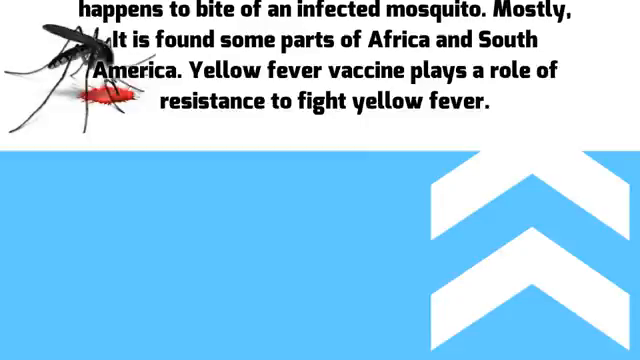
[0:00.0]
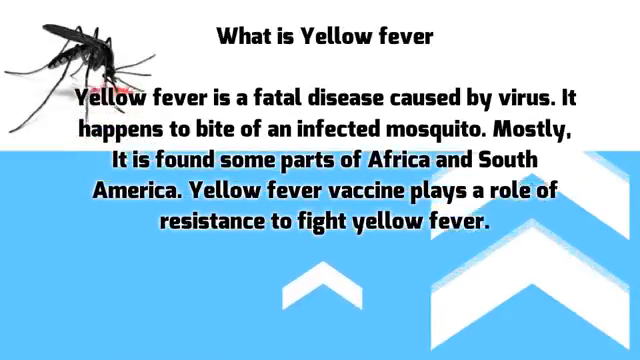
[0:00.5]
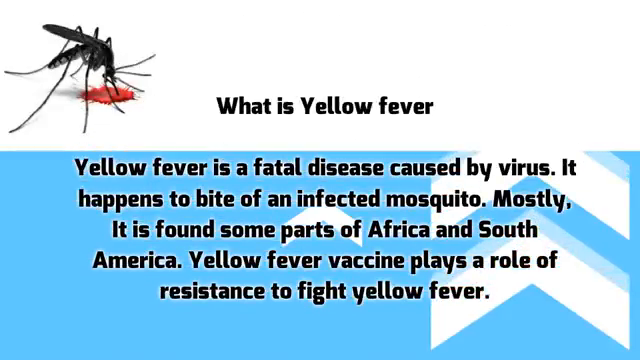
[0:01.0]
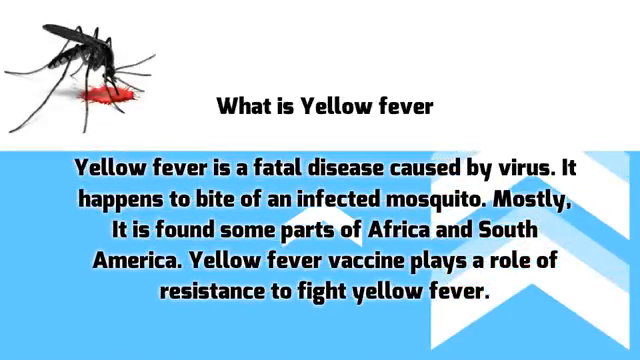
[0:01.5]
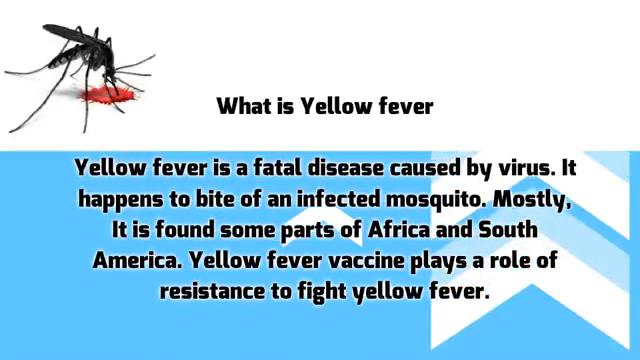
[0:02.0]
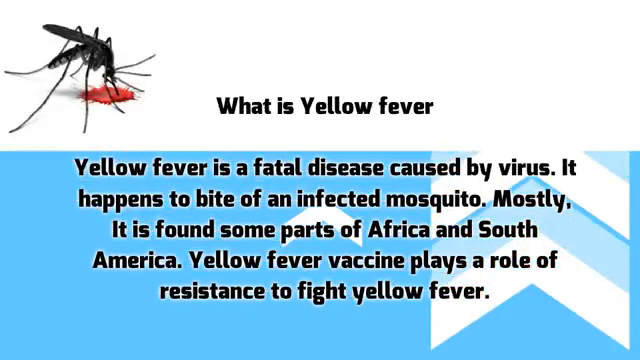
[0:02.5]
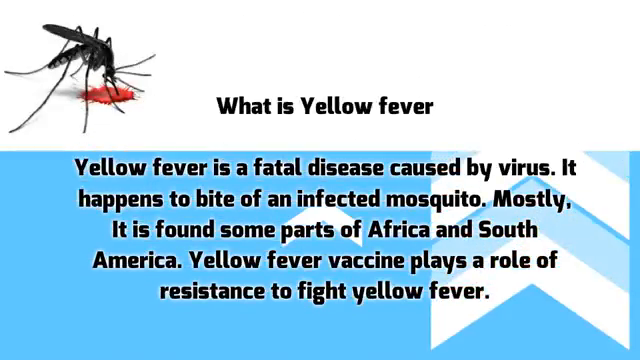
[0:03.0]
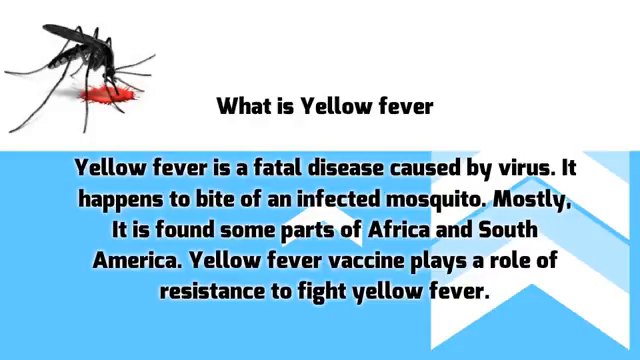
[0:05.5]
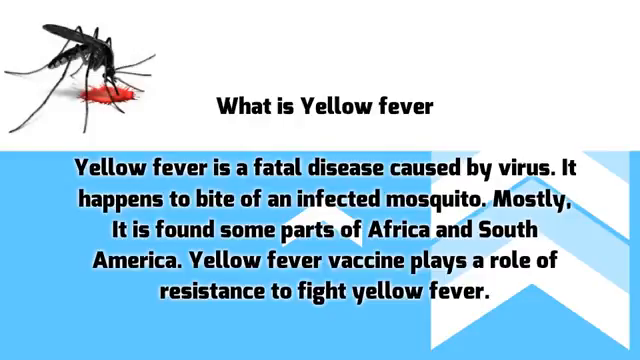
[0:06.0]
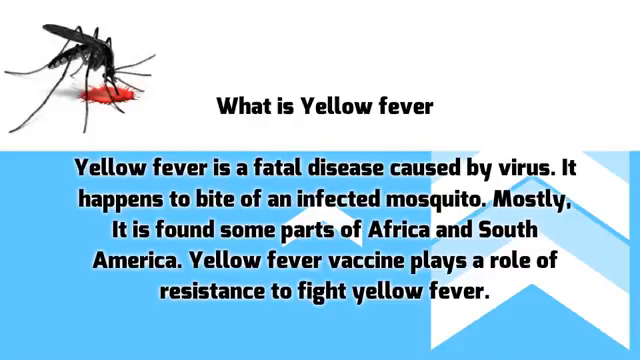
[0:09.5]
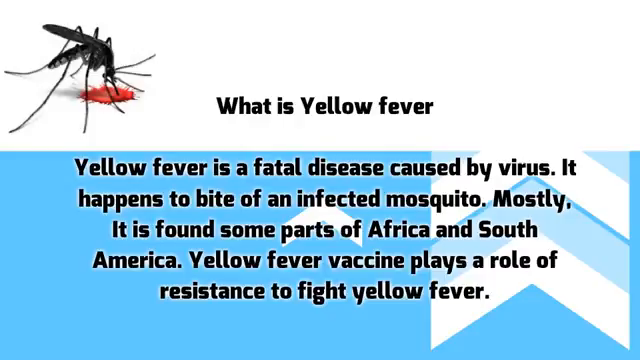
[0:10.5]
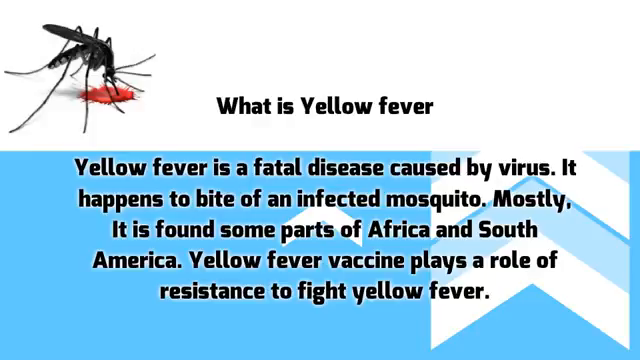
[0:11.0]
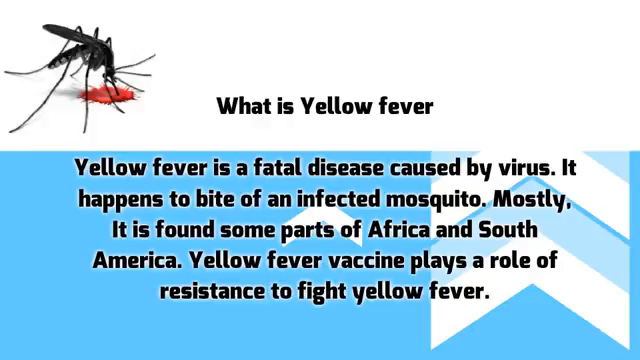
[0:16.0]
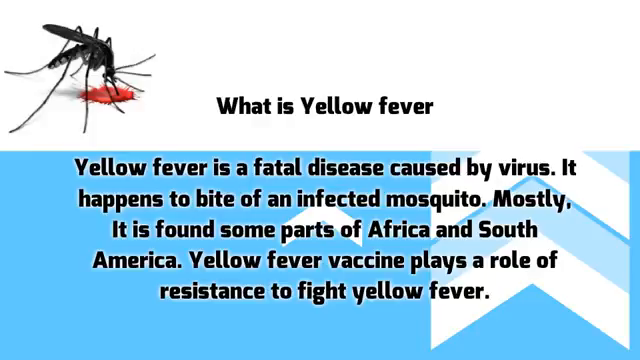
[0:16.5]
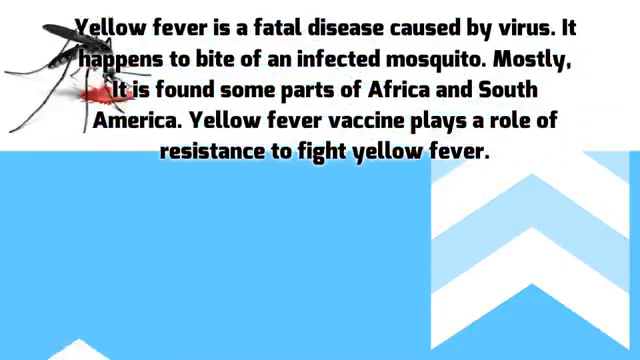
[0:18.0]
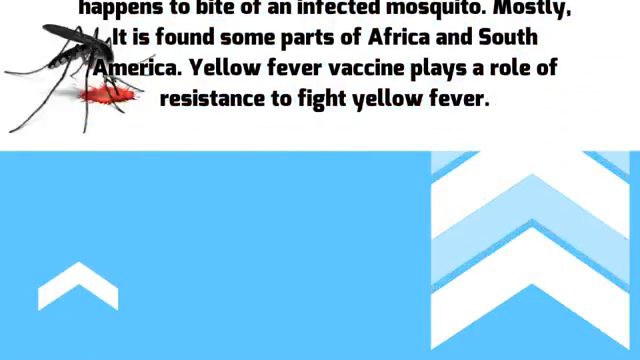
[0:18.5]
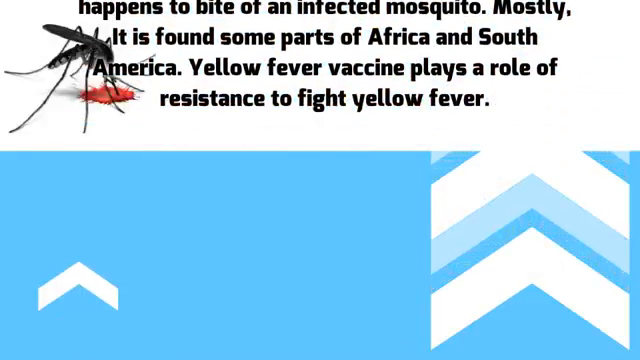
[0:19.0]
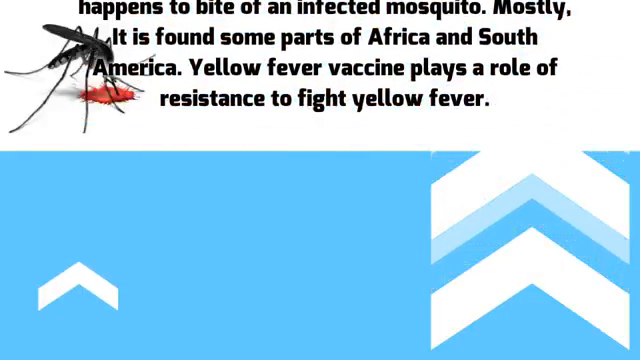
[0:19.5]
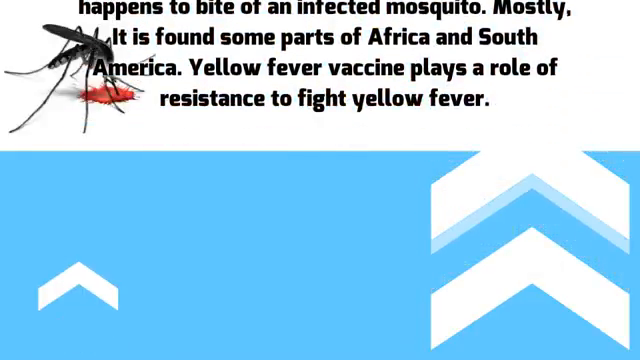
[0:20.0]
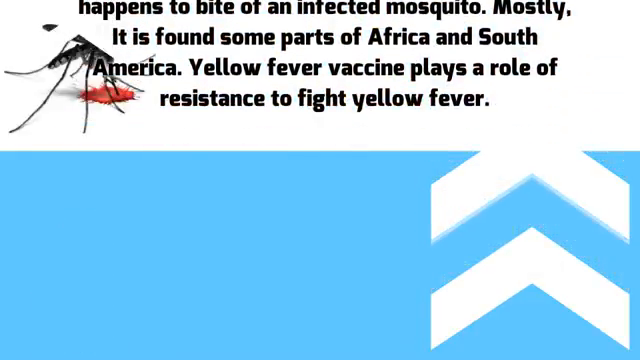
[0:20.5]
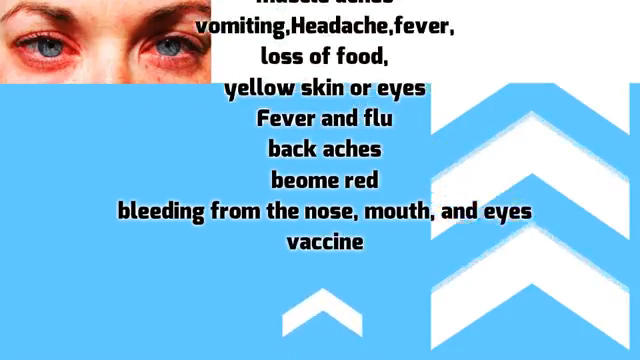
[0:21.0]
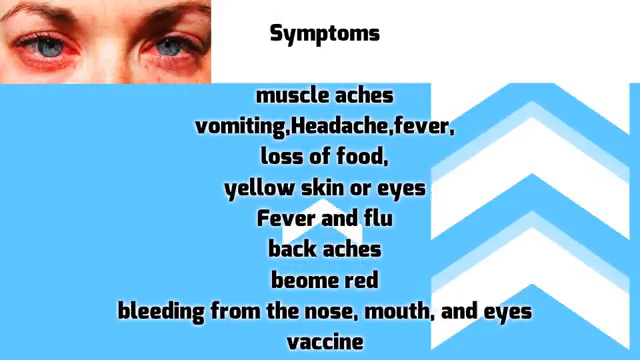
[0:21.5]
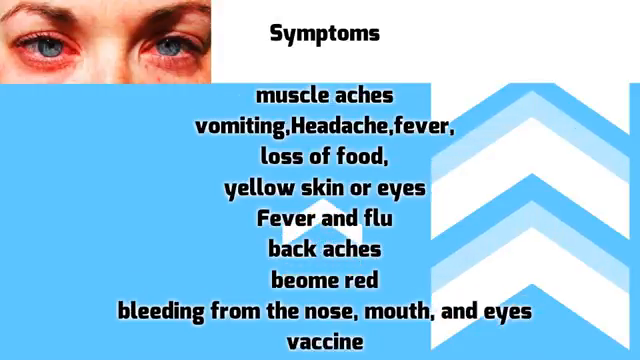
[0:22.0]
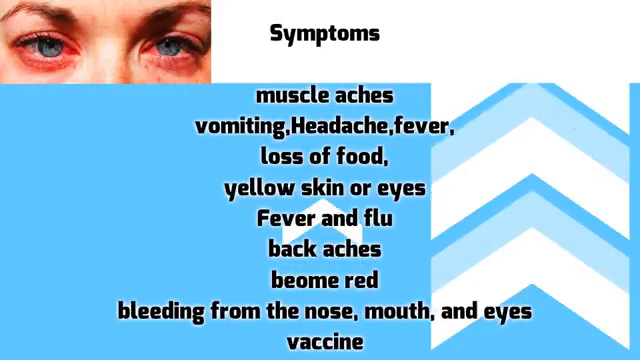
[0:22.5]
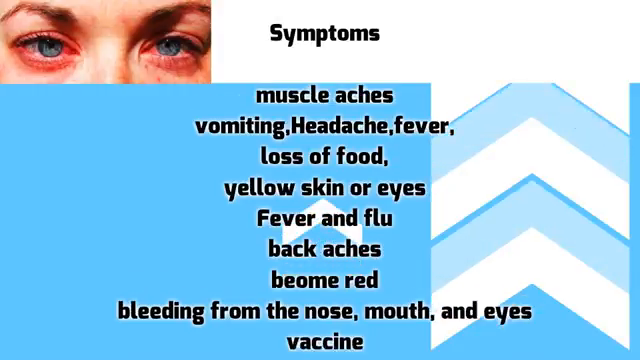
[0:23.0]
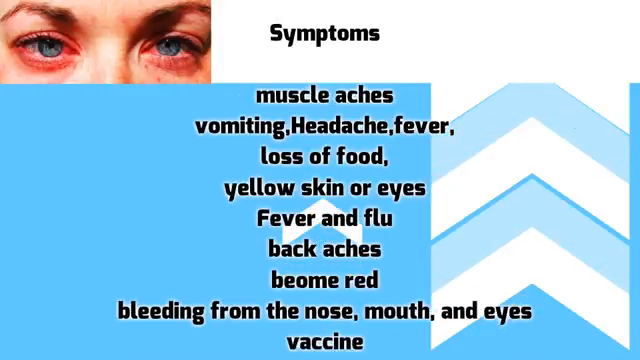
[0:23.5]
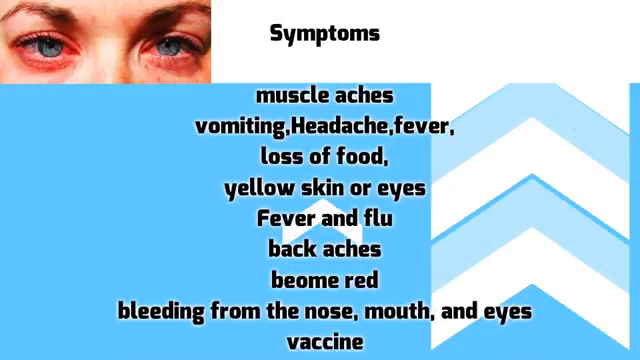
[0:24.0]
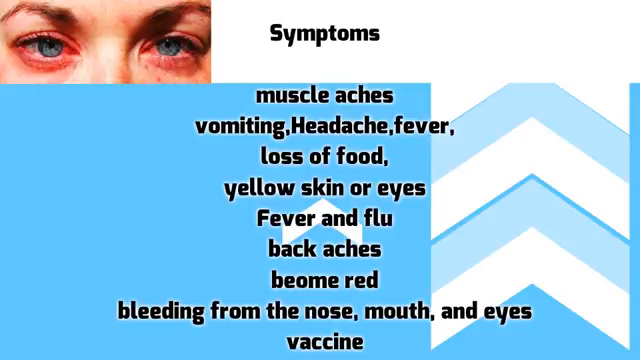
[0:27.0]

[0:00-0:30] The video opens on a blue and white background with text on the upper part of the screen reading "what is yellow fever?" To the left of the text is a large illustrated drawing of a mosquito drawing blood out of a white background. The explanatory text states that yellow fever is caused by a virus and that it is a fatal disease, and includes the lines "happens to bite of an infected mosquito. Mostly it is found in some parts of Africa and South America. The yellow fever vaccine plays a role of resistance to fight yellow fever." The text stays on the bottom blue and white part of the screen and is outlined in black against the blue and white background. The same text remains on screen until, near the end of the shot, it swipes upward and a list of yellow fever symptoms appears. An image of bloodshot eyes appears in a rectangle in the upper left of the screen. The listed symptoms include muscle aches, vomiting, headache and fever, as well as loss of food, yellow skin or eyes, fever and flu, backaches, and more.